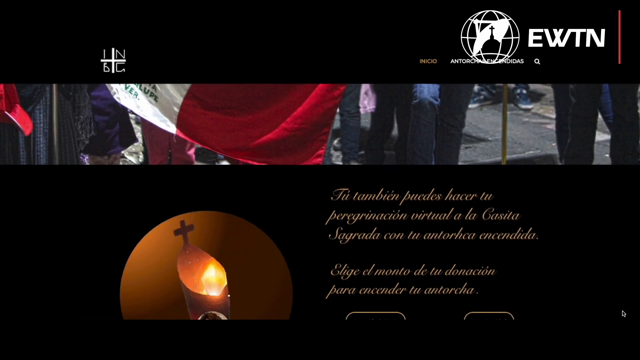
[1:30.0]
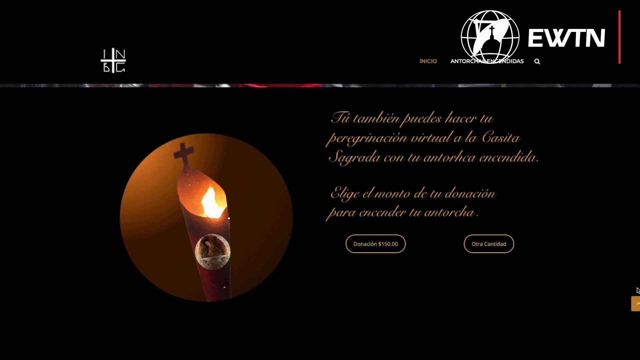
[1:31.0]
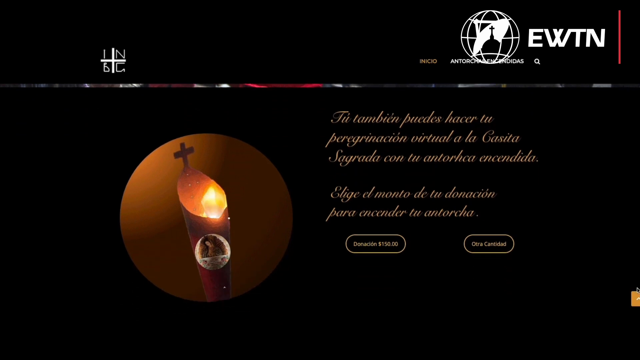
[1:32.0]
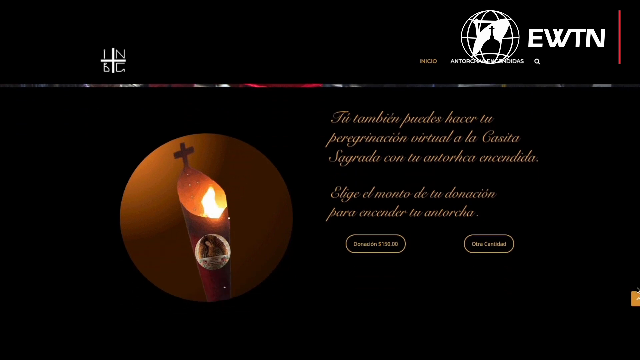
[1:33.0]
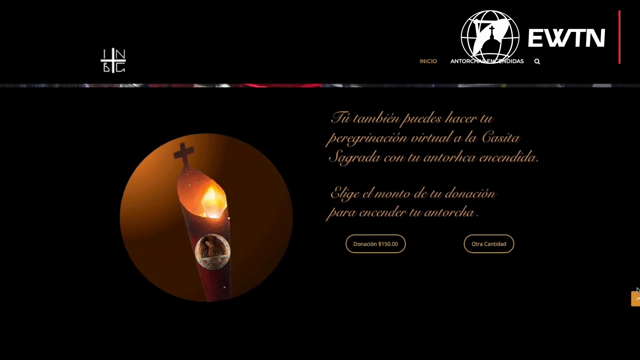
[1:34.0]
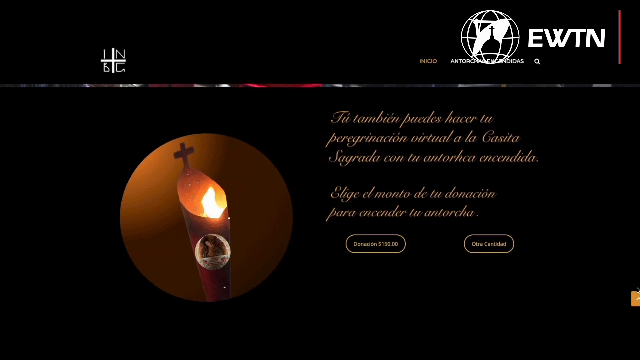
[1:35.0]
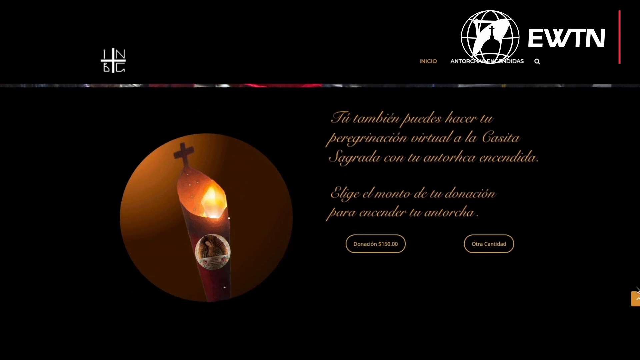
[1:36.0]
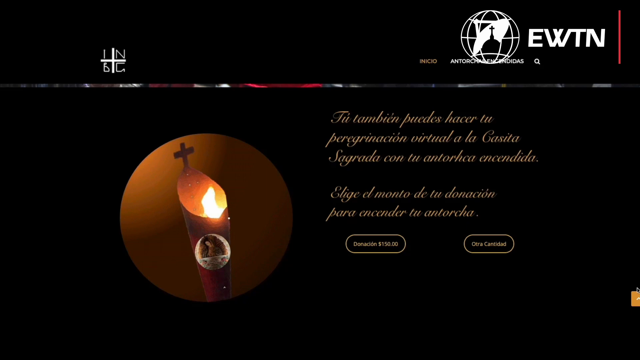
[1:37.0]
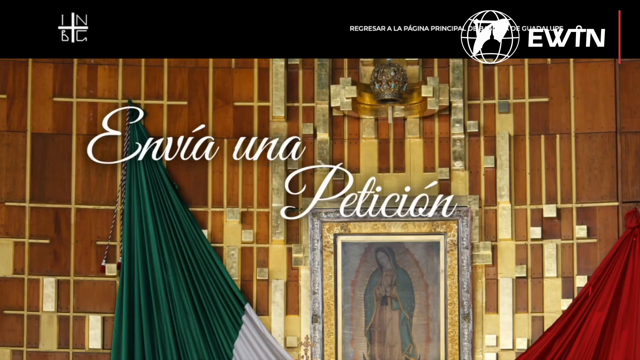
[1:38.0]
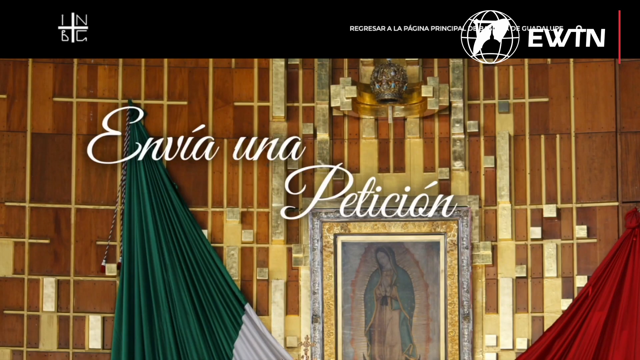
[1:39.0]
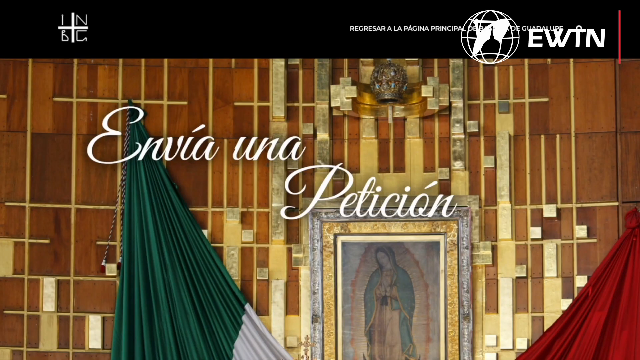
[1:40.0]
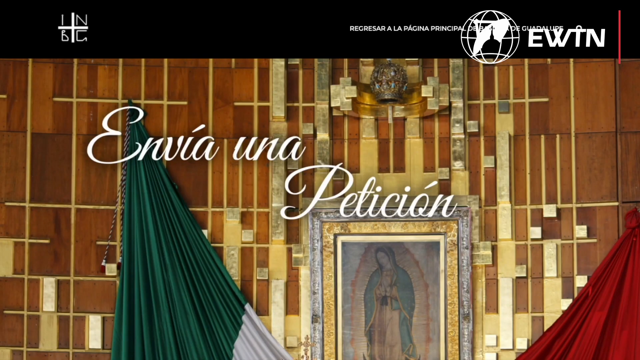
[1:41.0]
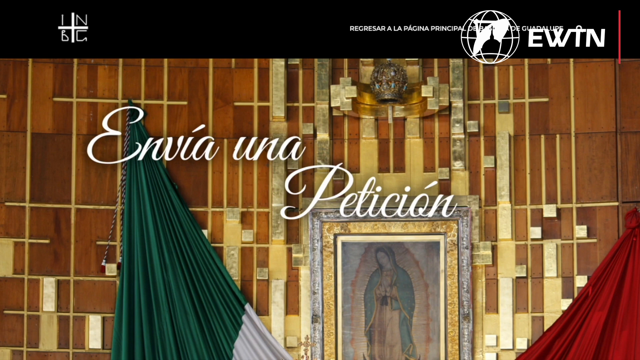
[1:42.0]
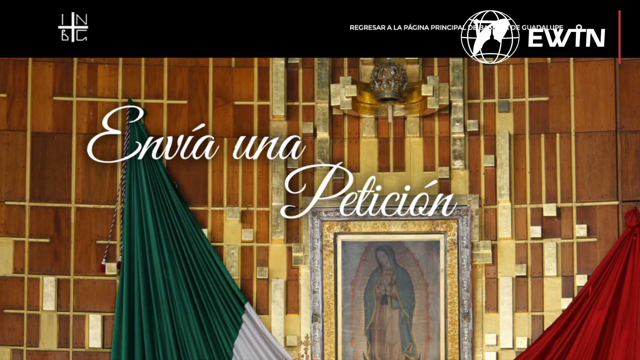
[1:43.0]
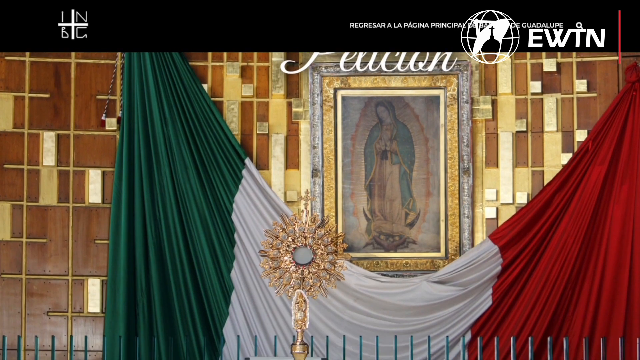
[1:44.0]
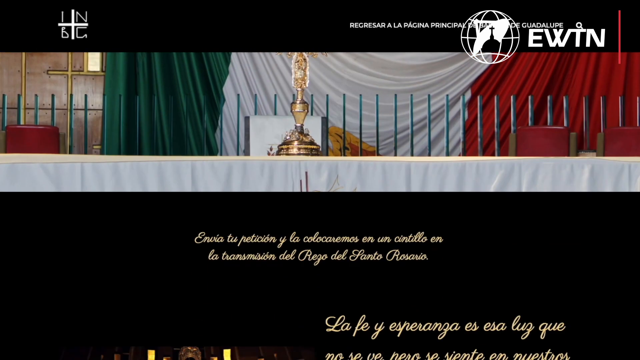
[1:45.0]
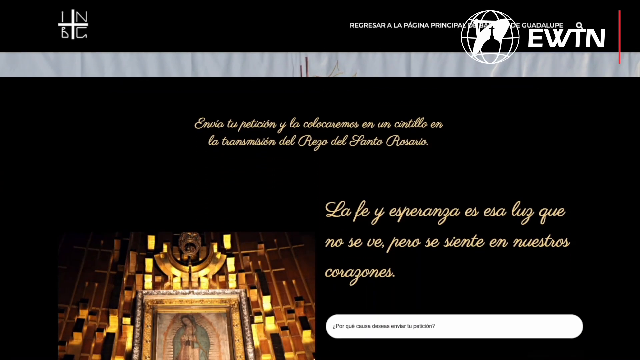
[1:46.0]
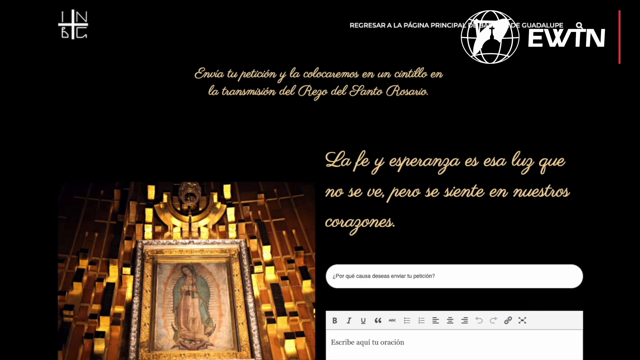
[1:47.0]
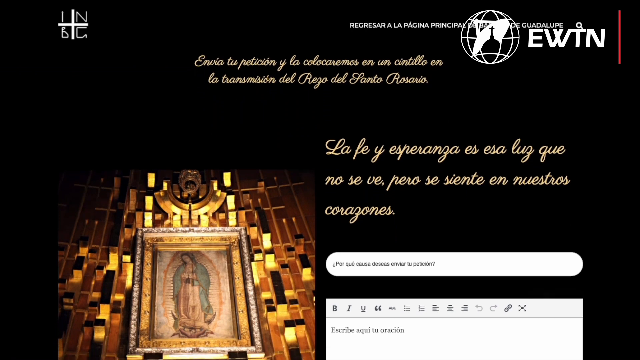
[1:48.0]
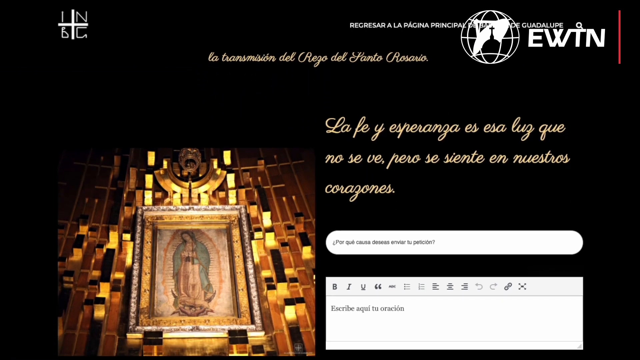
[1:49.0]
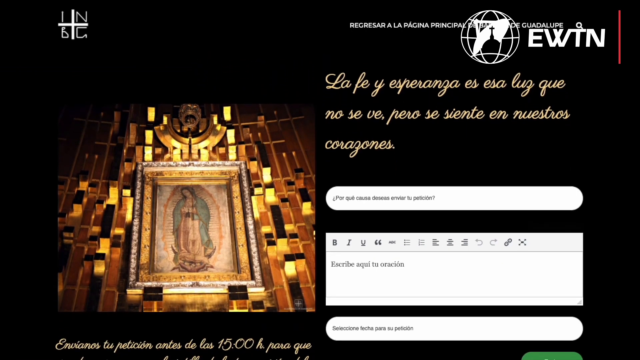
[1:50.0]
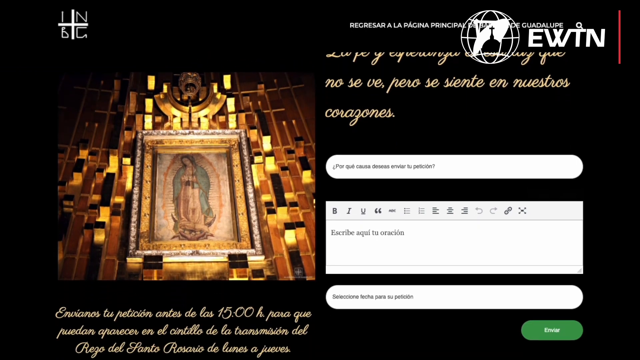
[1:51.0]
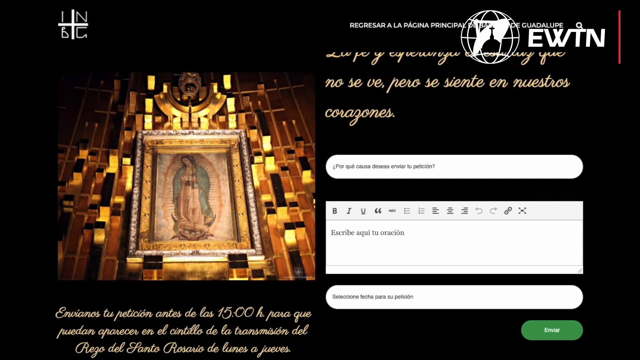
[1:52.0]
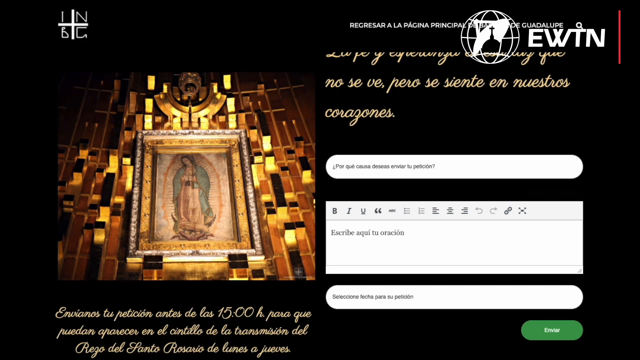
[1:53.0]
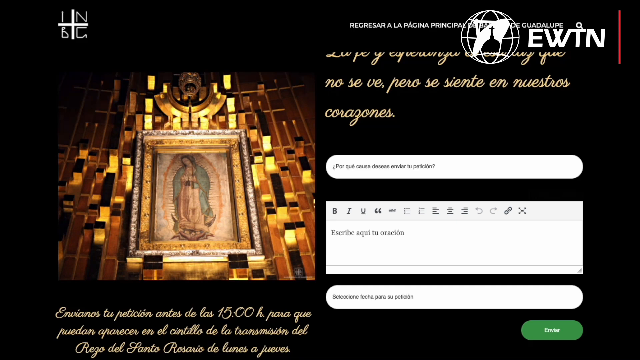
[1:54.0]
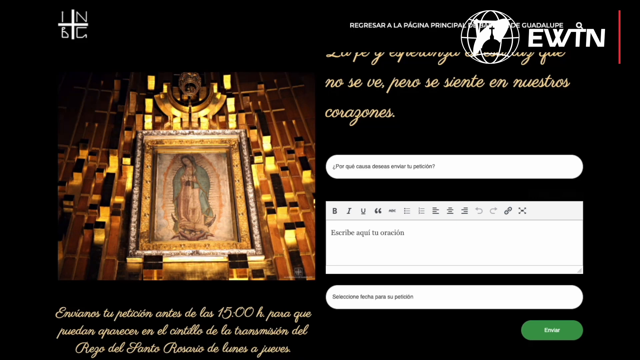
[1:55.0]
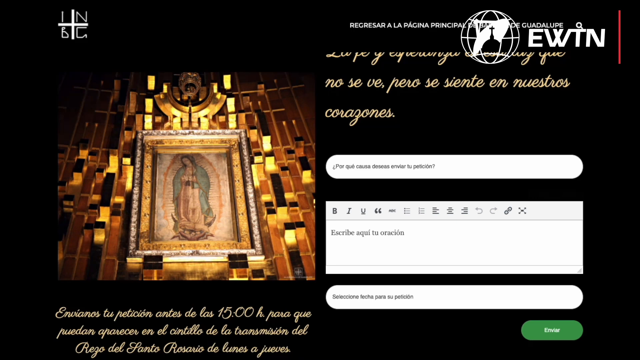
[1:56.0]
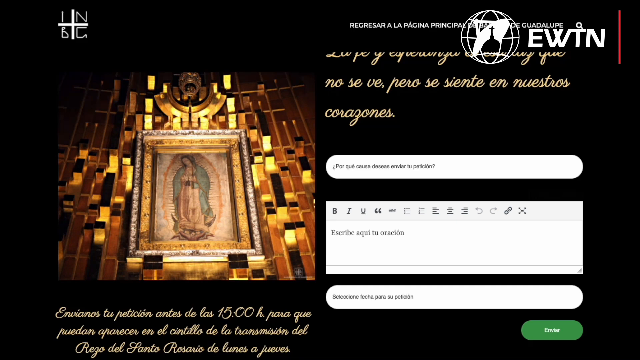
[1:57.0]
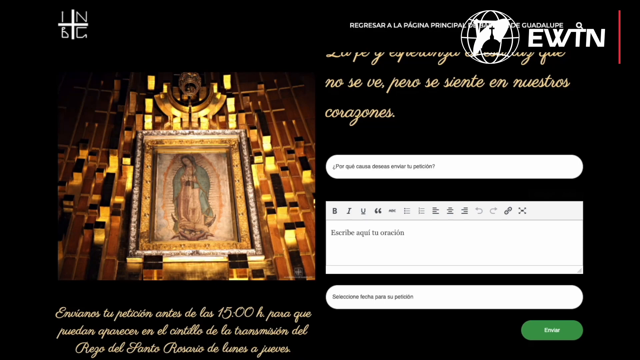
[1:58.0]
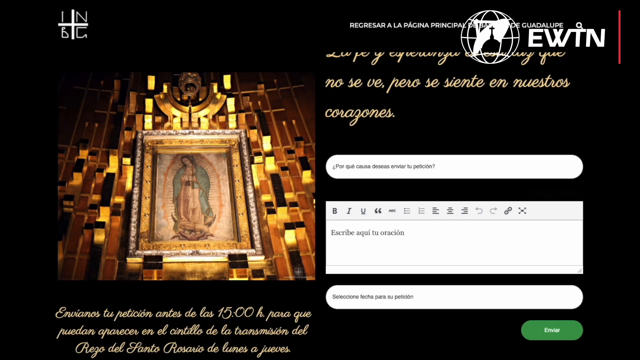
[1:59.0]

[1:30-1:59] The page goes down to show another candle, this time in some type of encapsulated item with just the top out, with a cross attached to it. On the candle is a picture of a woman, likely the Virgin Mary. This page also asks for a donation, this time in the amount of $150, with another option presumably for stating a different amount to give. The text on the page is in Spanish, written in gold letters on a black background in an almost cursive font, and reads "Tu tambien puedes hacer tu peregrinacion virtual a la casita sagrada con tu". The page is likely asking for monetary donations.